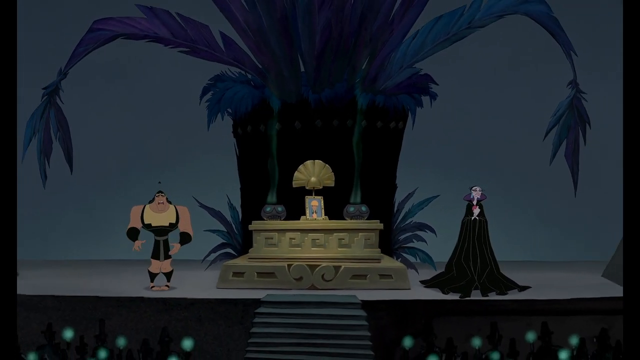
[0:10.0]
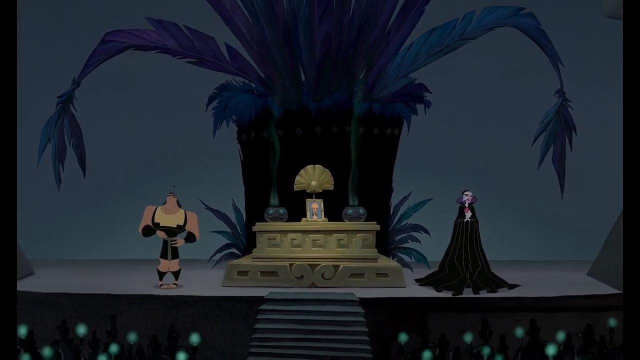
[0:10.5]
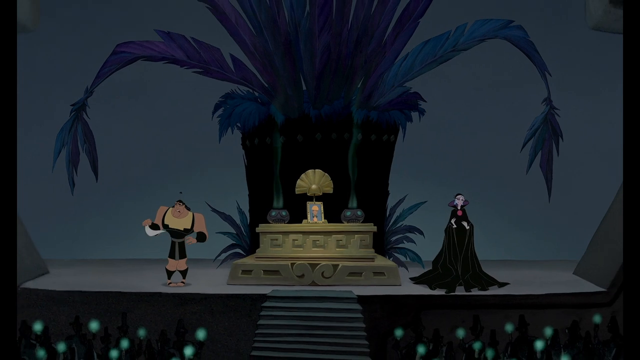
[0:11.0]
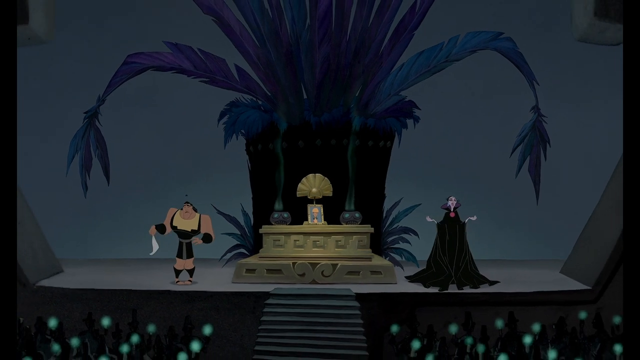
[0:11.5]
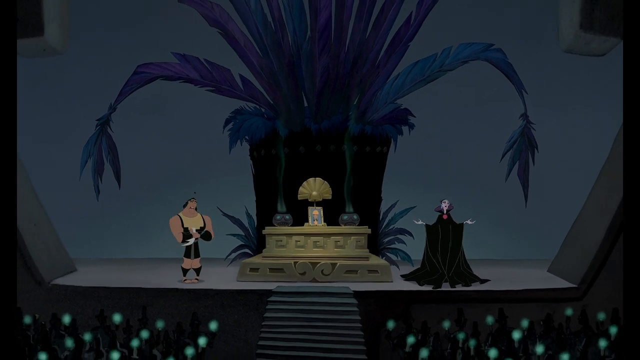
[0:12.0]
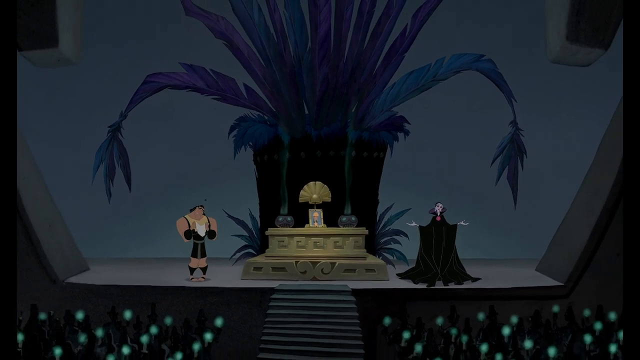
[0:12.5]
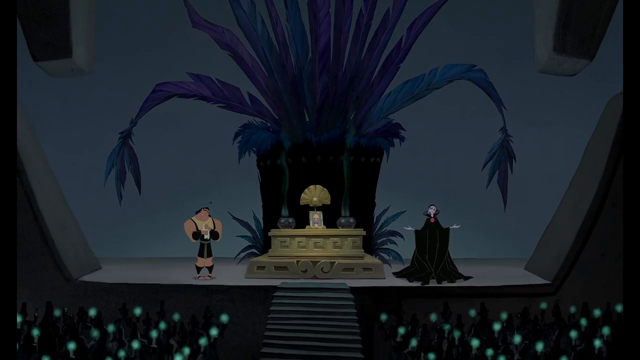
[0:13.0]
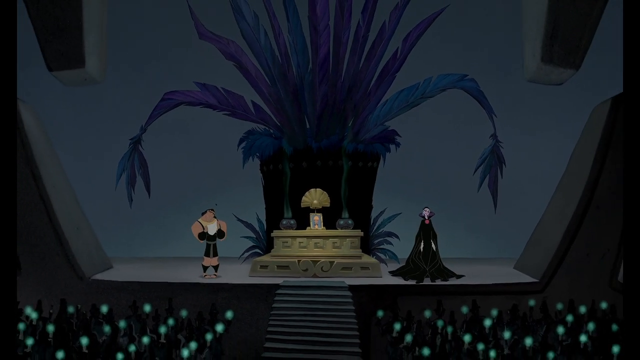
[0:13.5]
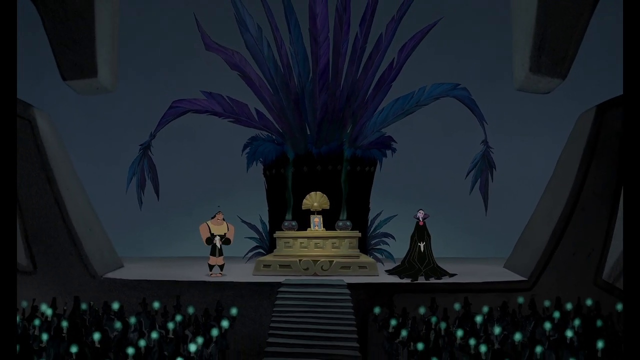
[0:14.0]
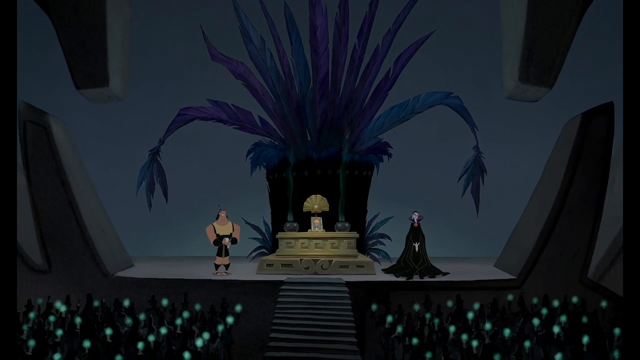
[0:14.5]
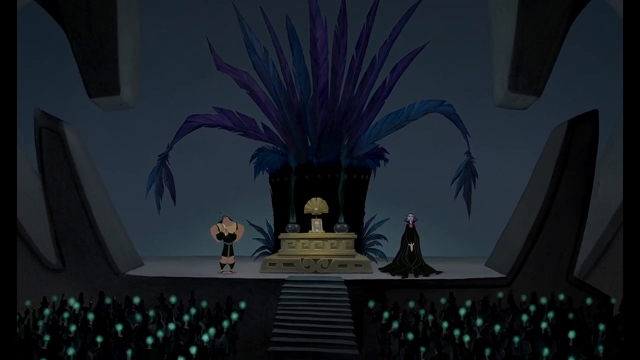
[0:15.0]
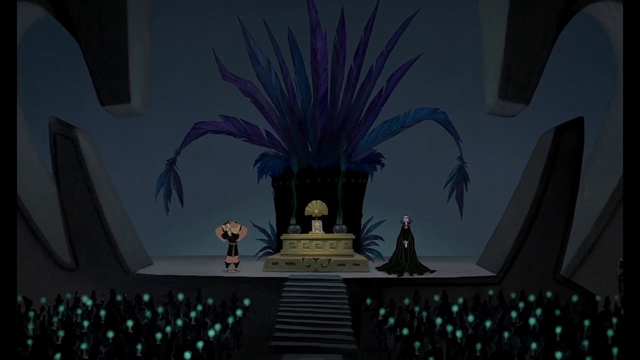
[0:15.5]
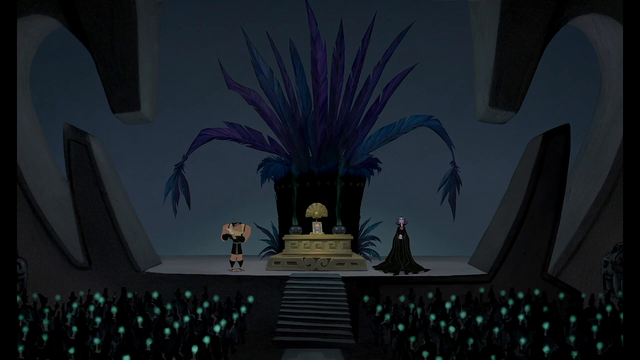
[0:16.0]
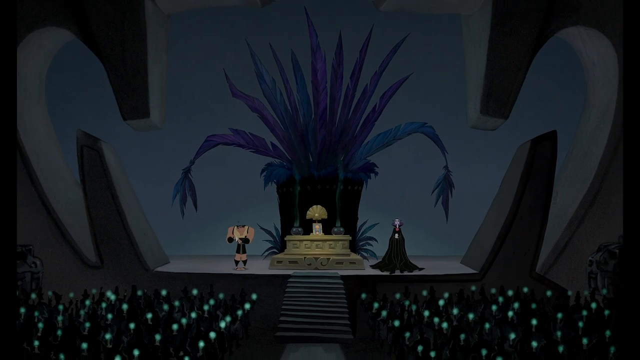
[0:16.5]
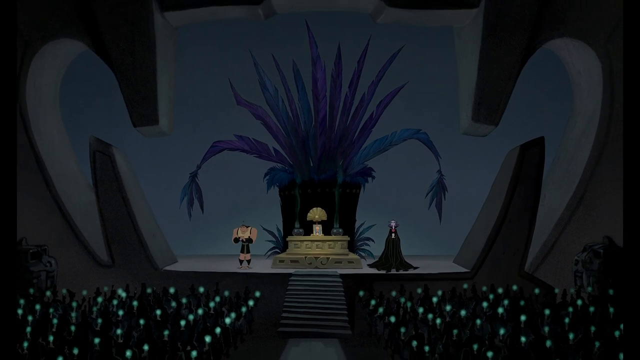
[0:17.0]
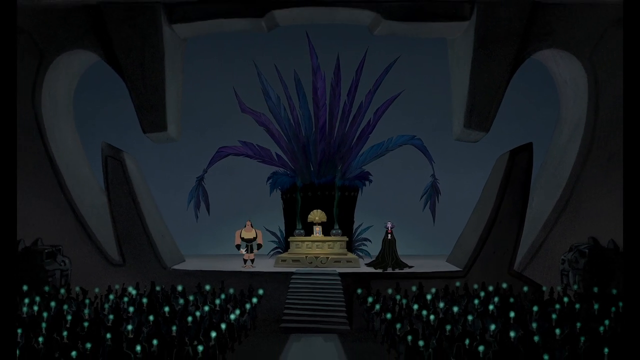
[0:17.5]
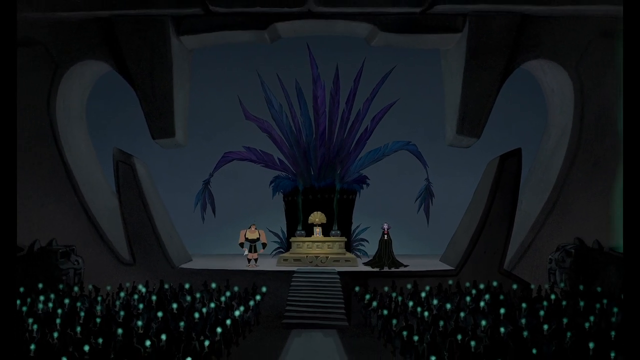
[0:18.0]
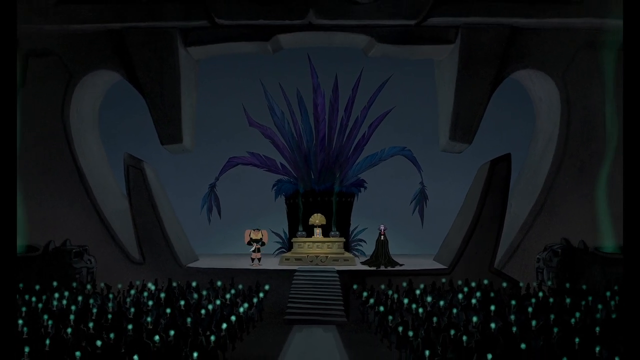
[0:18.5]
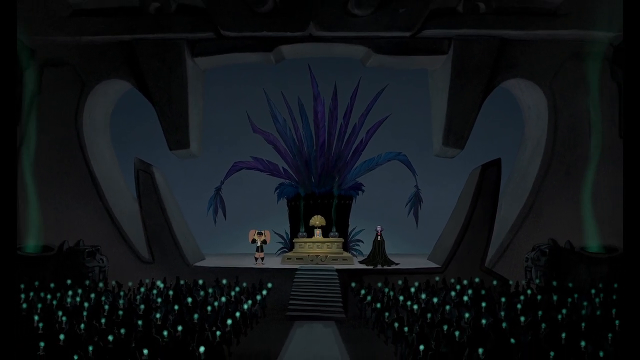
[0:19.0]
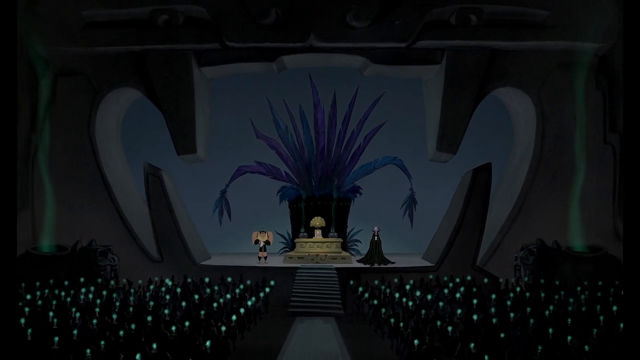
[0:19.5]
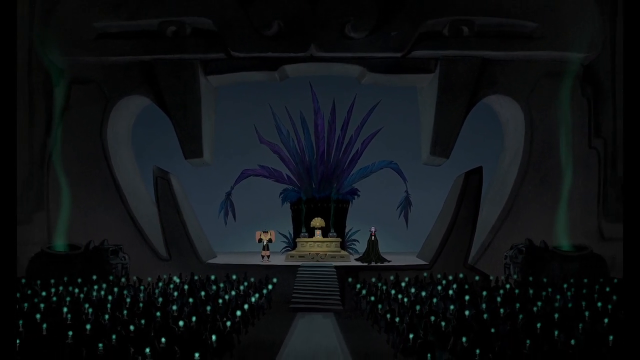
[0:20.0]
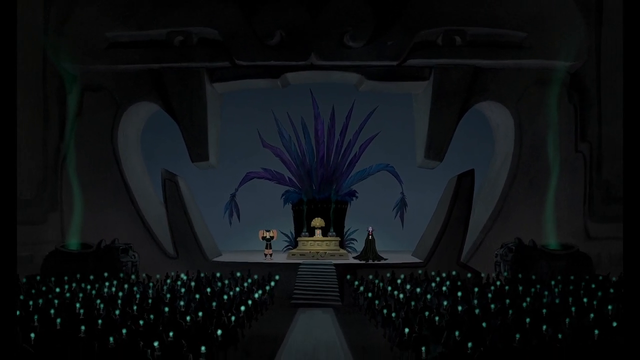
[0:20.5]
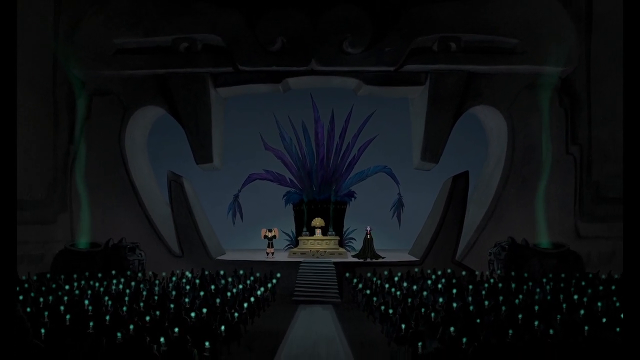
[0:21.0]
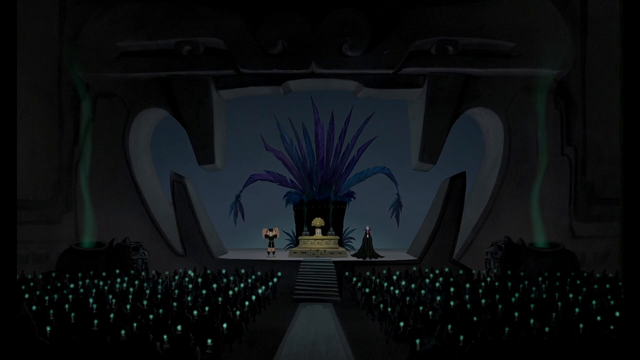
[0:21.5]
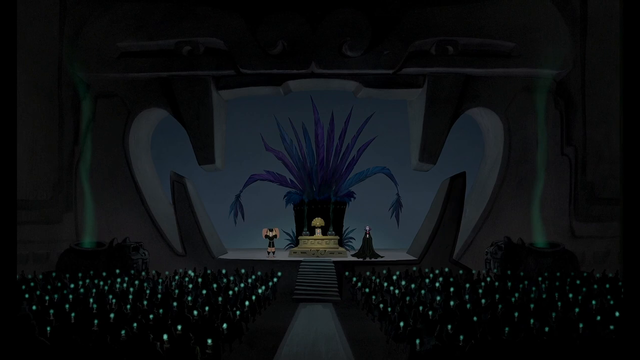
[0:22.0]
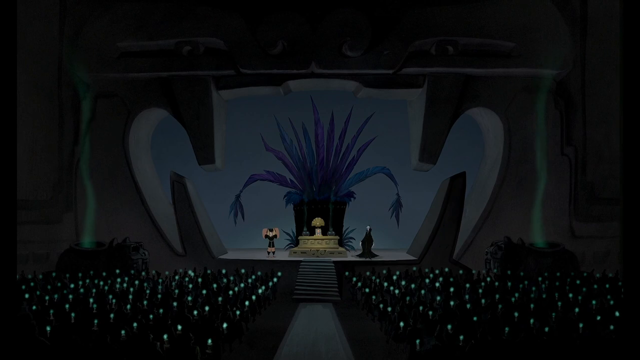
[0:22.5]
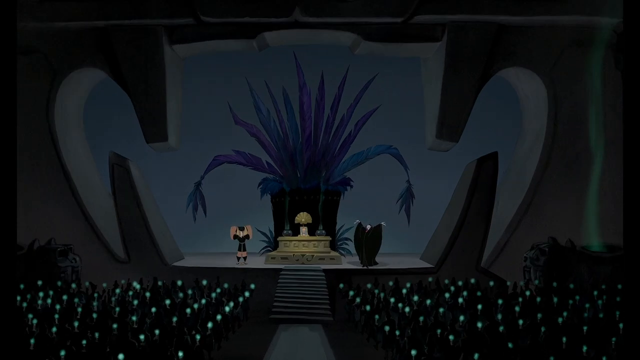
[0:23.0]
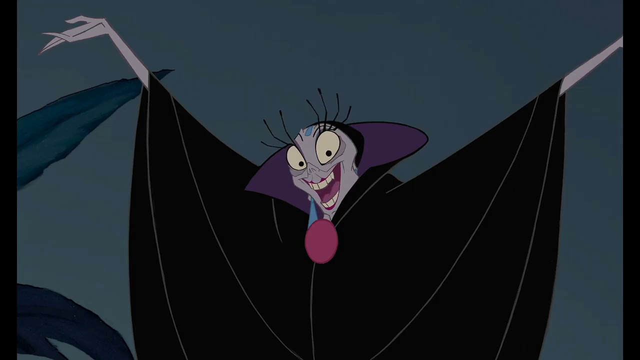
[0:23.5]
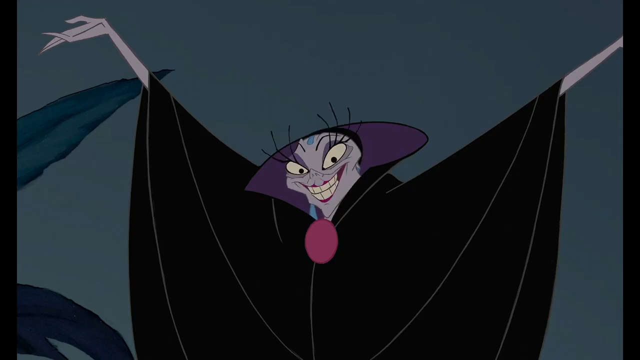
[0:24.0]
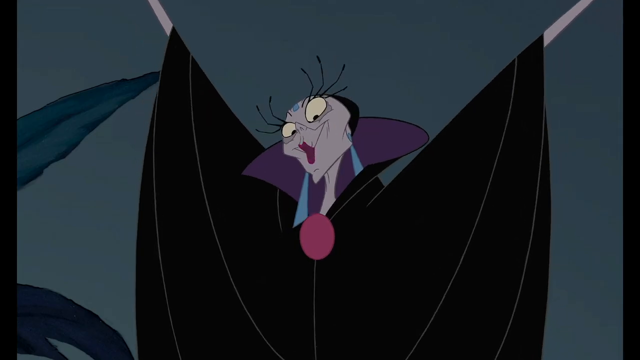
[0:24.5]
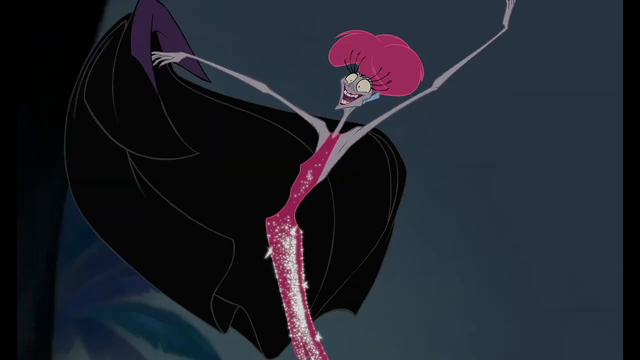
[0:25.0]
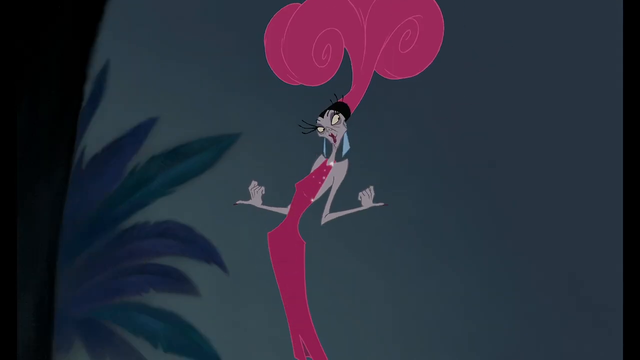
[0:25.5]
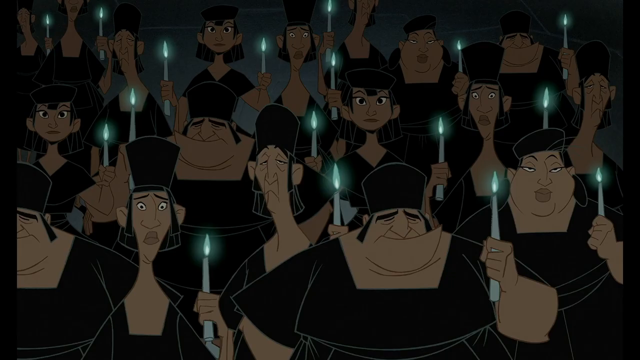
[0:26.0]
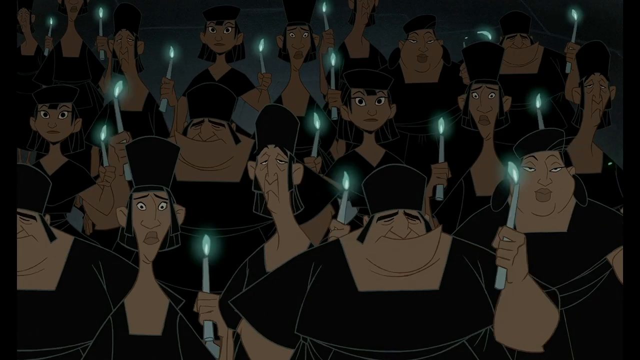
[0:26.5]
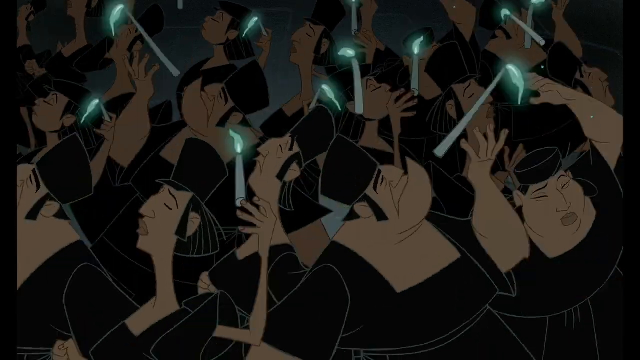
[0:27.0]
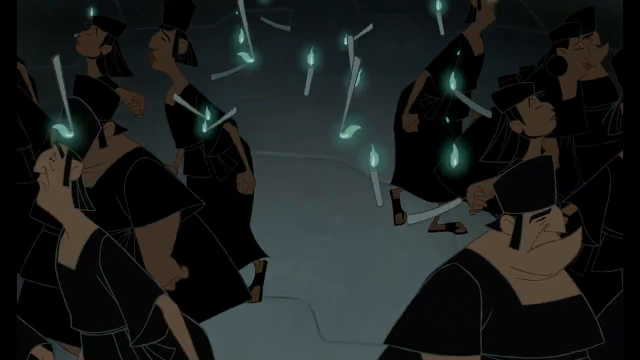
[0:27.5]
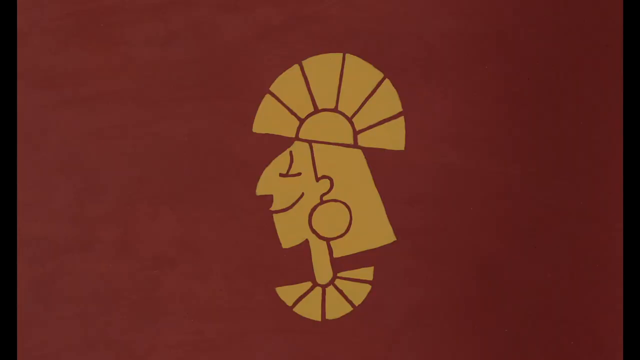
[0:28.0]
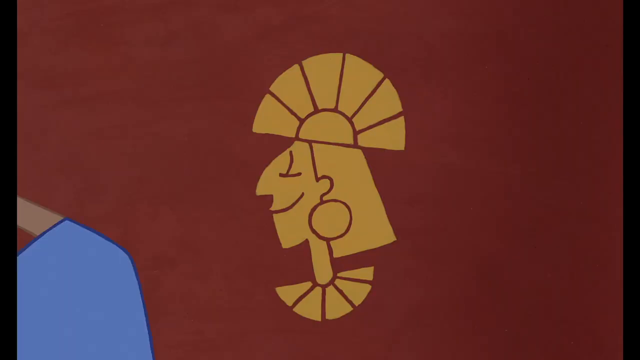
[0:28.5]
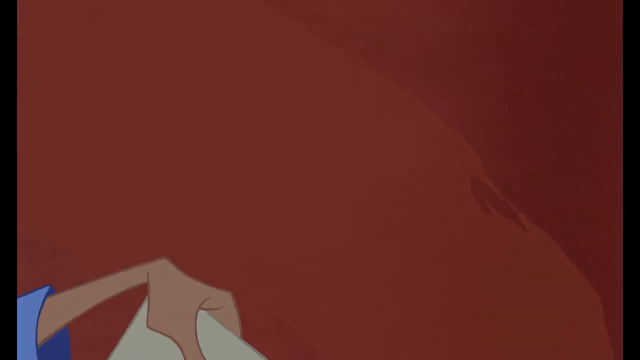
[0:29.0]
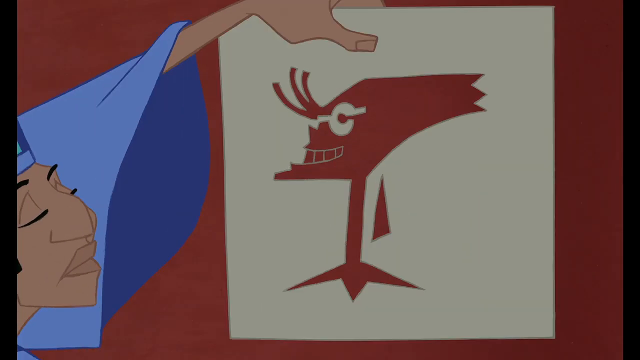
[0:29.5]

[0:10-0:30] An animated memorial scene shows a character wearing a large crown that looks like it represents the sun. On top of his casket there seem to be two pots with cactuses in them. He is in a very ornate gold sarcophagus. To its left is a large, brawny warrior figure, and to its right is a mourning woman in a long black robe. Behind the coffin is a large monument built with black feathers, apparently made to represent death, and everyone seems to be mourning. As the view pans out, a crowd of people is also revealed mourning the death. Suddenly the woman slings off her clothes, and she says, "He's dead, the country is mine now, you'll all worship me." The people leave and begin posting signs of her as queen.